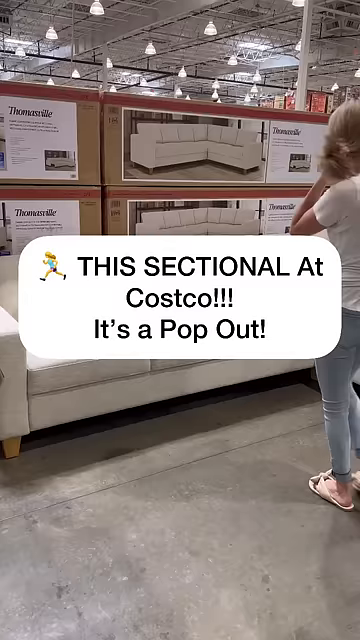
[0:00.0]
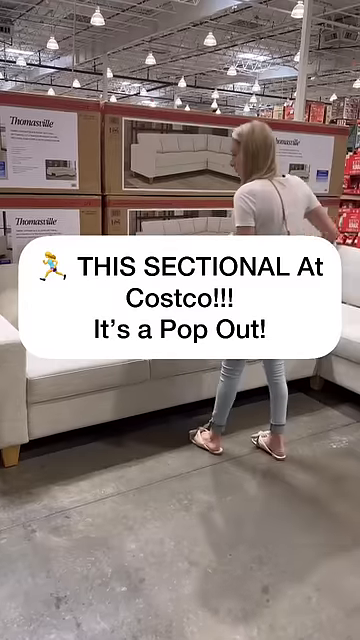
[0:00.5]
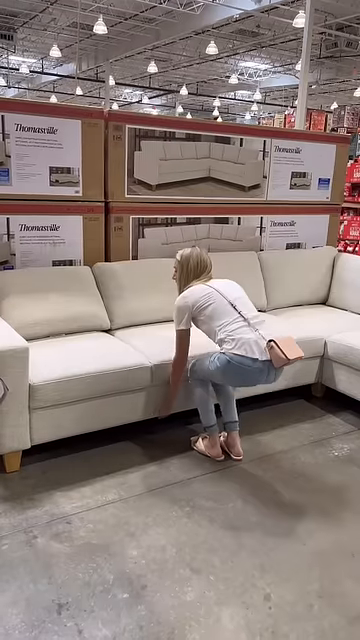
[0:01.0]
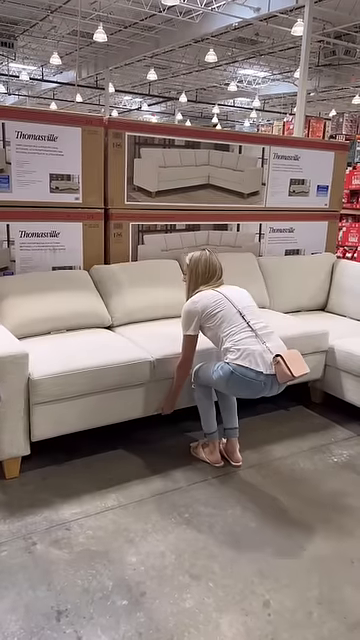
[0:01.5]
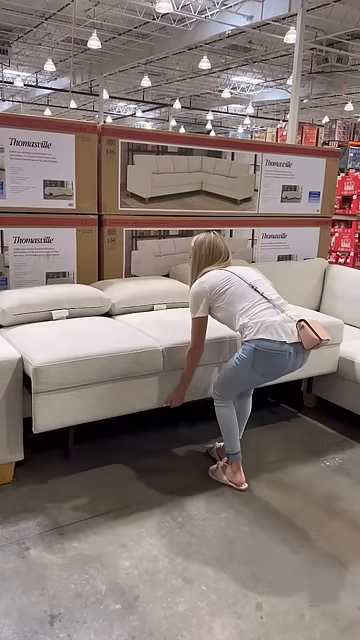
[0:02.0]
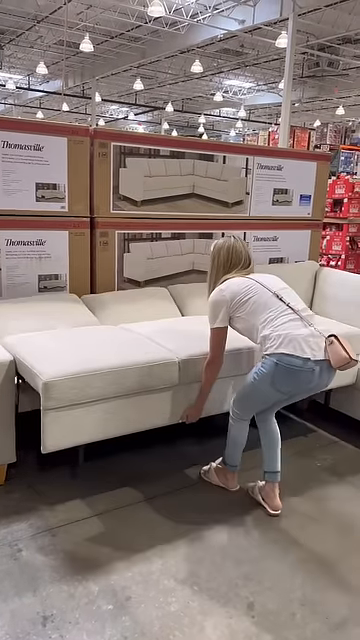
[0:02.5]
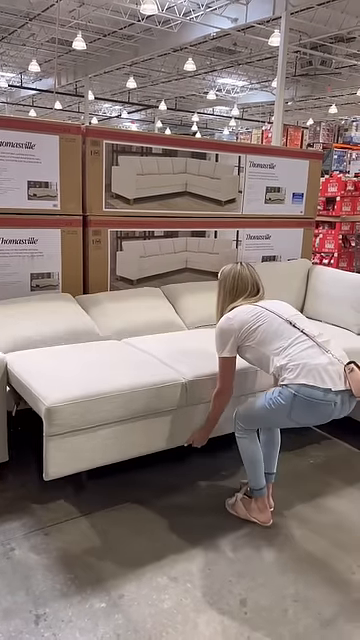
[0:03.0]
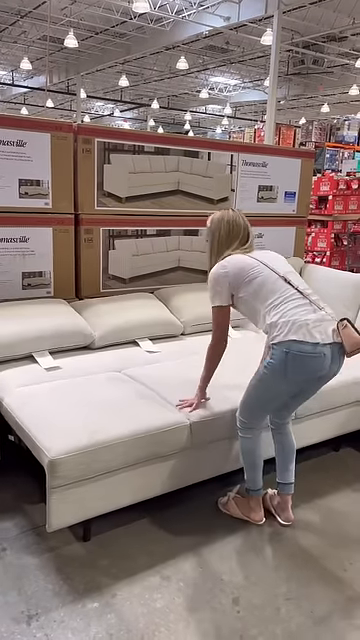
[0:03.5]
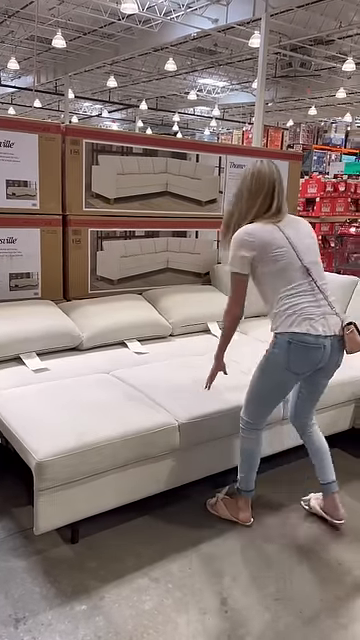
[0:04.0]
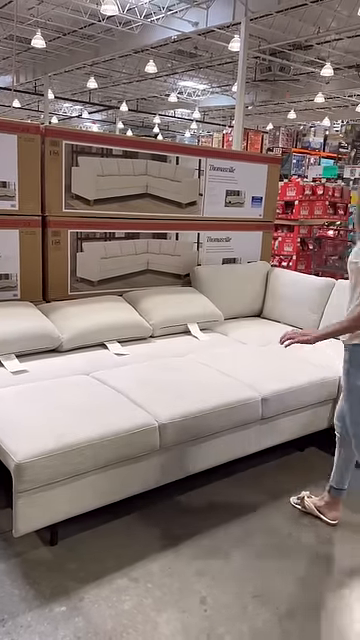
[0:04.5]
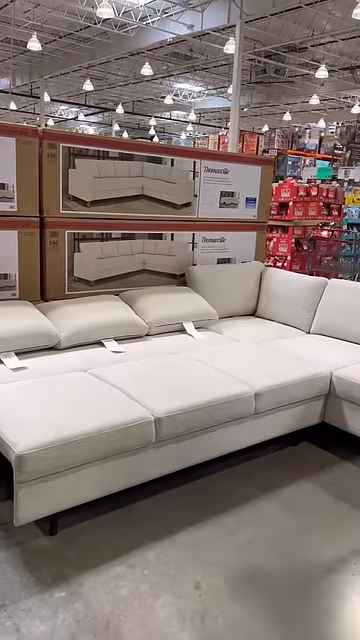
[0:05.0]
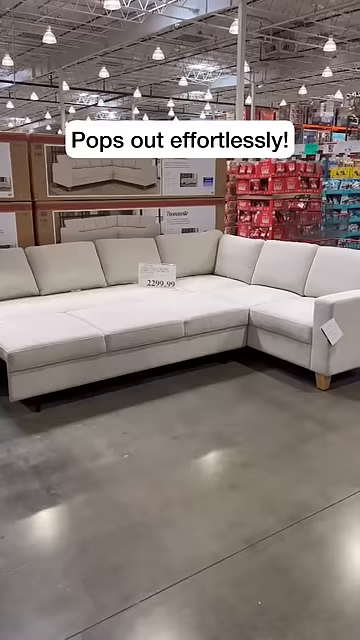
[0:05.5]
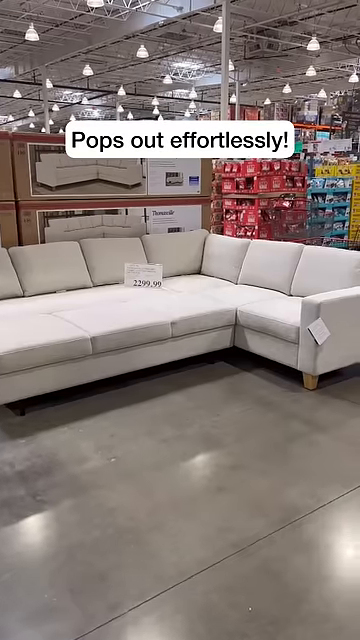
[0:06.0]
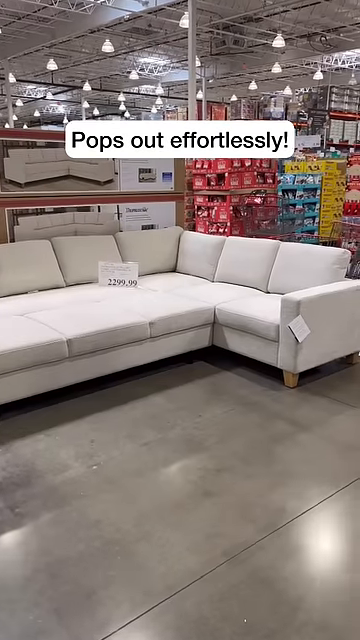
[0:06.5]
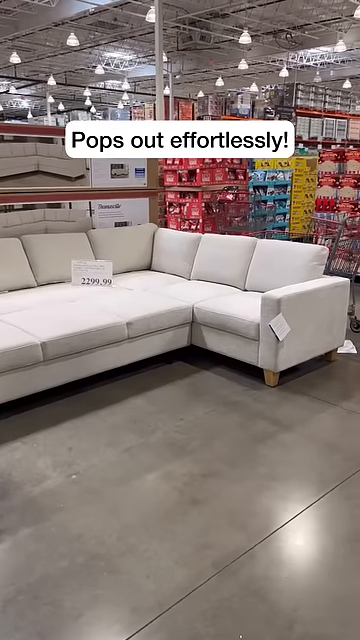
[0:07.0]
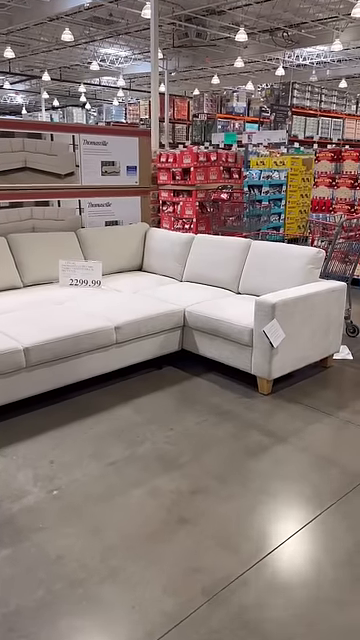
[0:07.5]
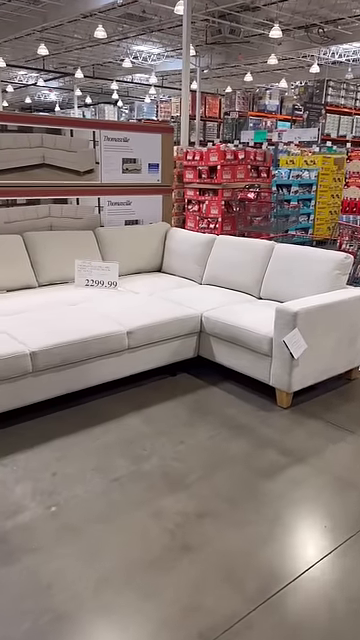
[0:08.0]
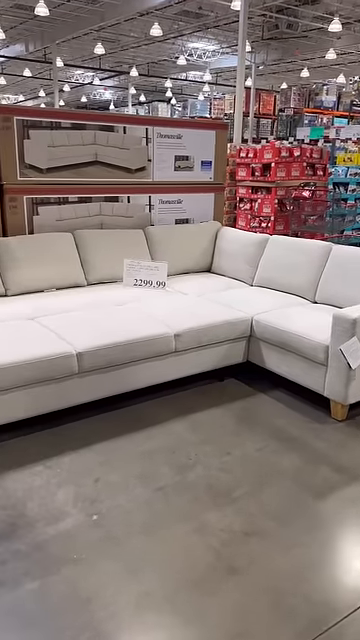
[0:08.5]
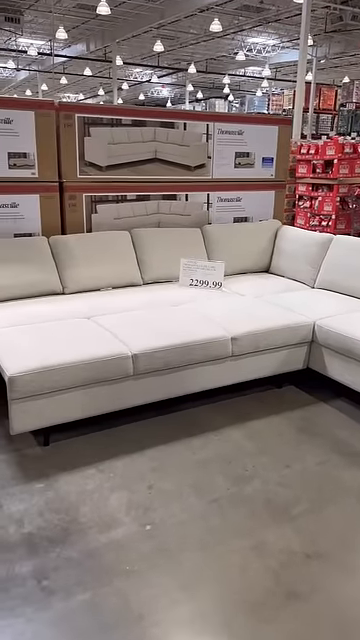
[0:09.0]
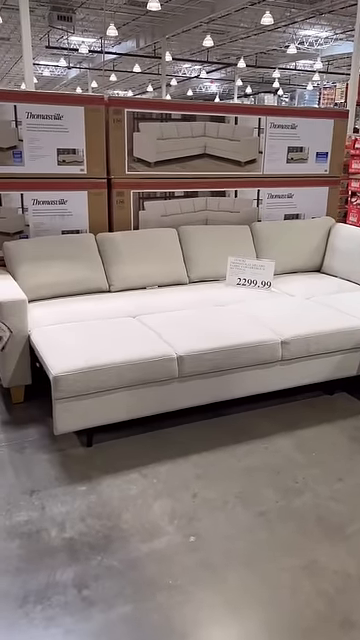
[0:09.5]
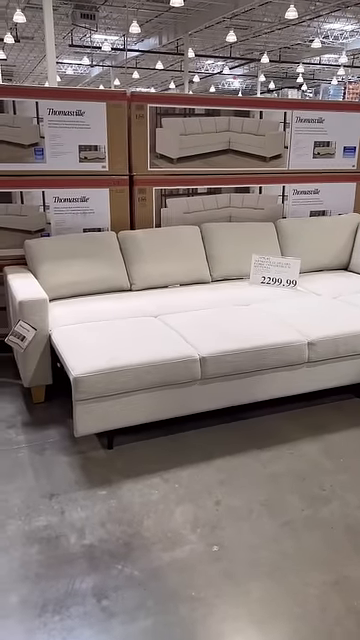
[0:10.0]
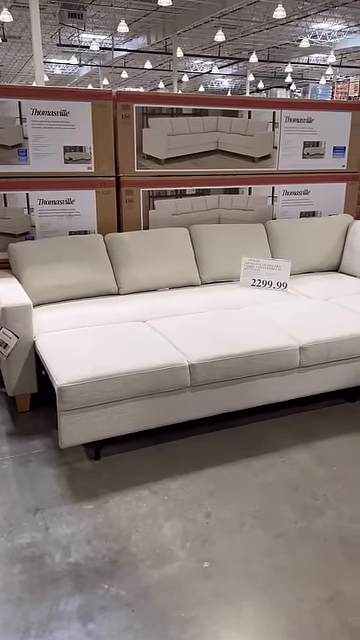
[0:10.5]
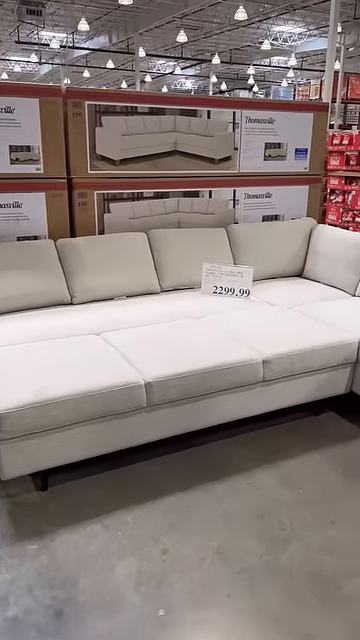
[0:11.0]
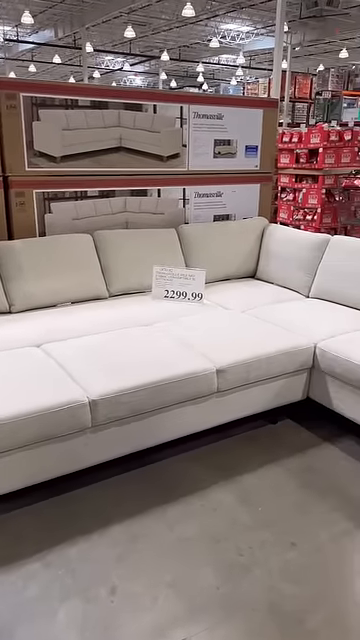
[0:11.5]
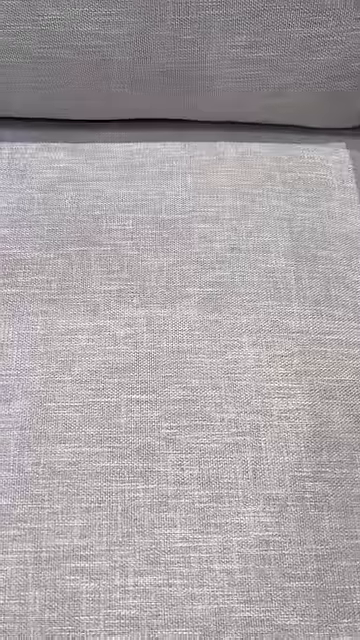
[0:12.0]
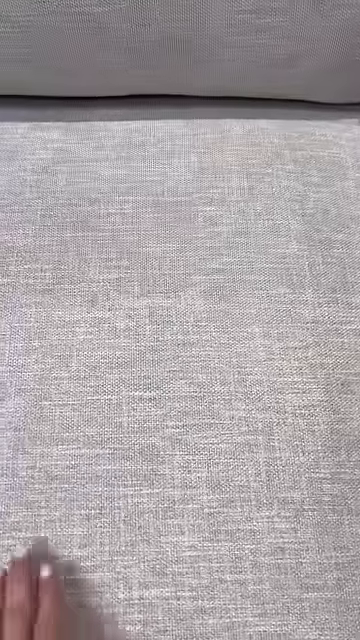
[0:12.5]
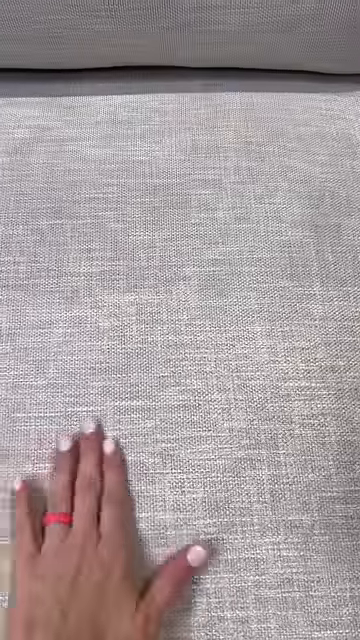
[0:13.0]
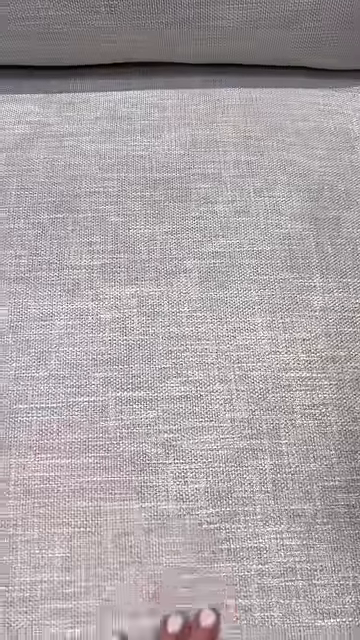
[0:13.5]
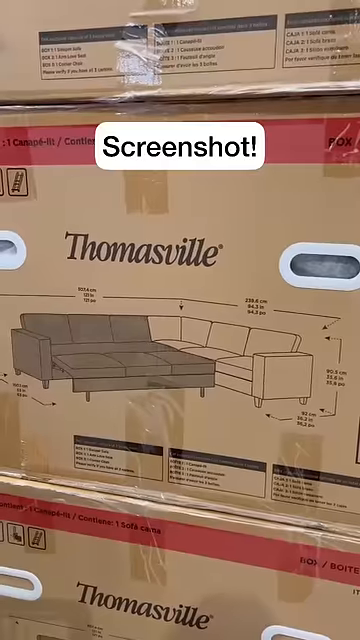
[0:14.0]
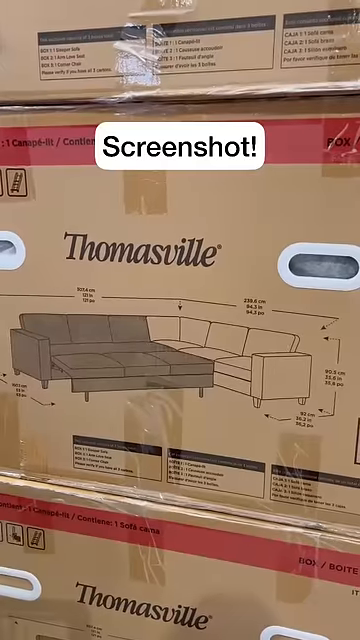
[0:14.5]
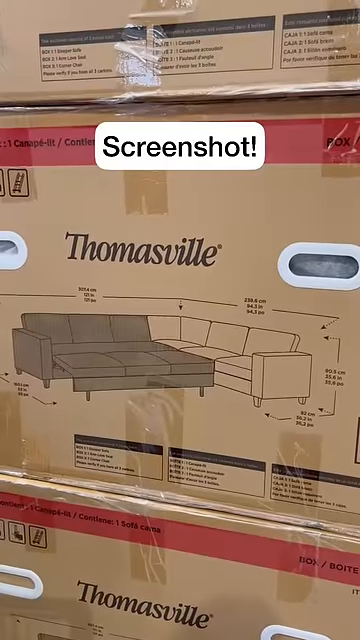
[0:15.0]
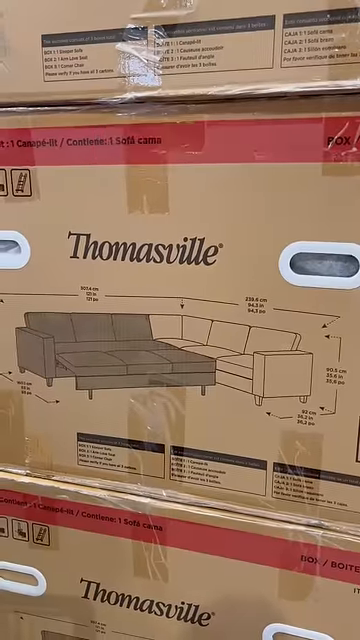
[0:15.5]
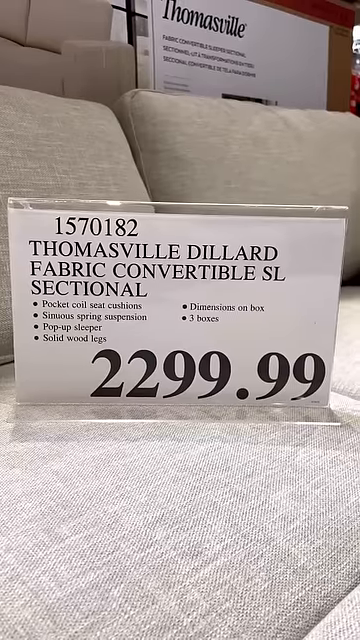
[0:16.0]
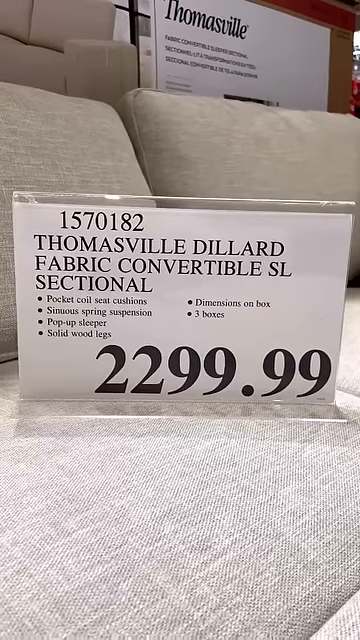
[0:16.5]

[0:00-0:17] The video is a short shot inside a Costco warehouse, with what looks like a concrete floor and high ceilings visible. At the start, a text bubble pops out that says "this sectional at Costco, it's a pop-out." A blonde white woman wearing white pants and a white shirt walks up to an L-shaped sectional couch, puts her hands underneath, and pulls out the section to make a larger area for lounging. After she pulls it out, the camera starts to move side to side to show off the couch. Then there is a close-up of the cushion as her left hand rubs against the fabric, which is not white here but a darker gray. The video ends with a picture of the brown box that the Thomasville sectional couch comes in, which has a white label that says "screenshot."